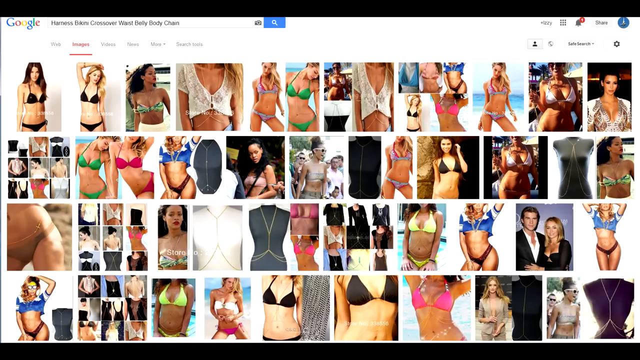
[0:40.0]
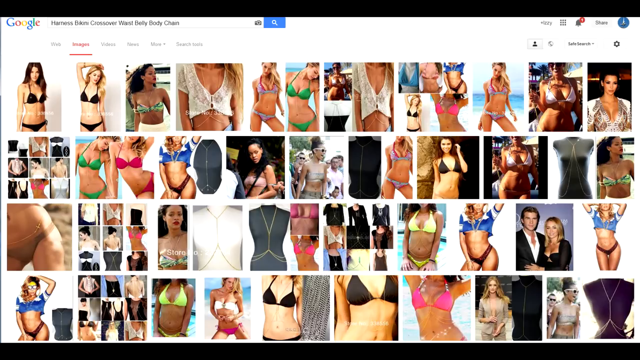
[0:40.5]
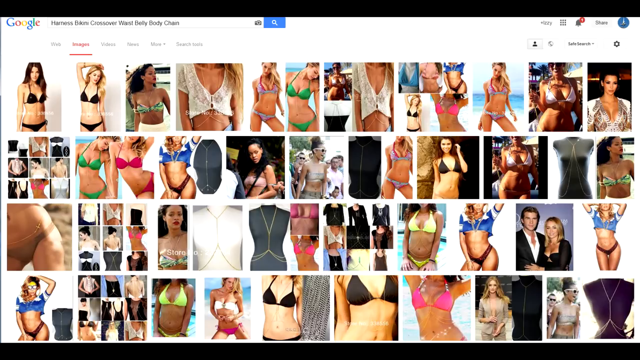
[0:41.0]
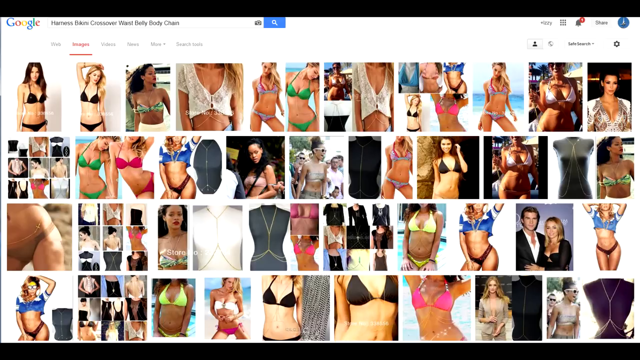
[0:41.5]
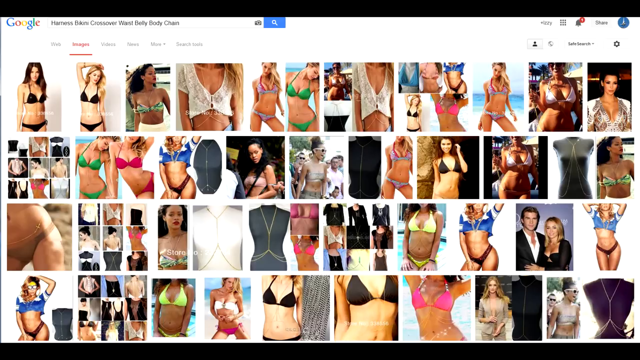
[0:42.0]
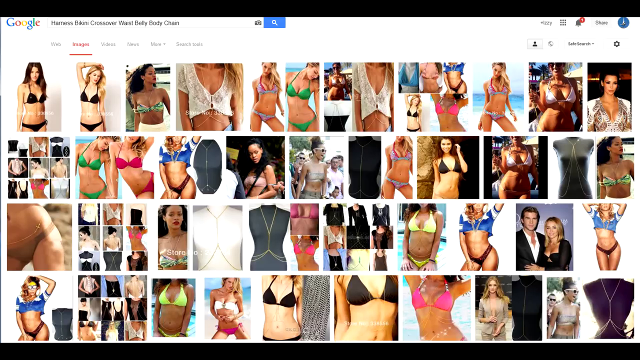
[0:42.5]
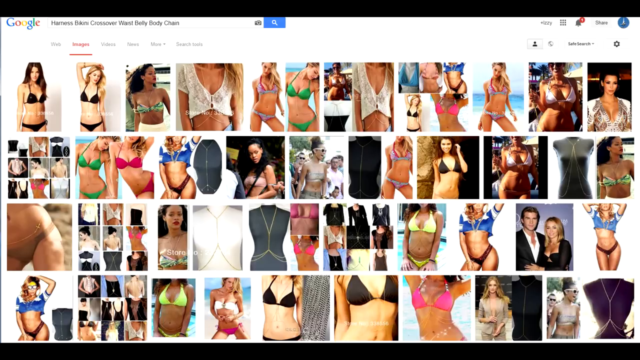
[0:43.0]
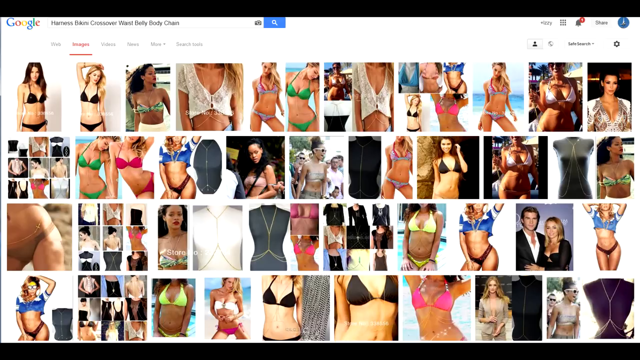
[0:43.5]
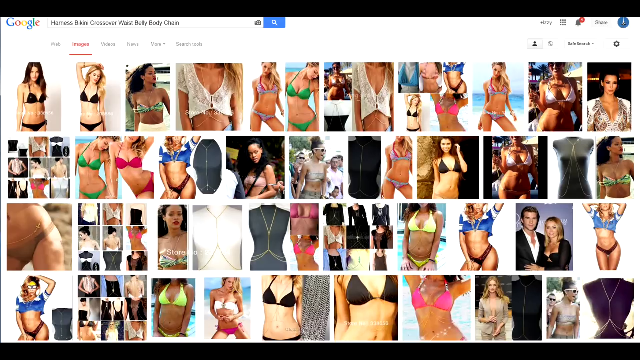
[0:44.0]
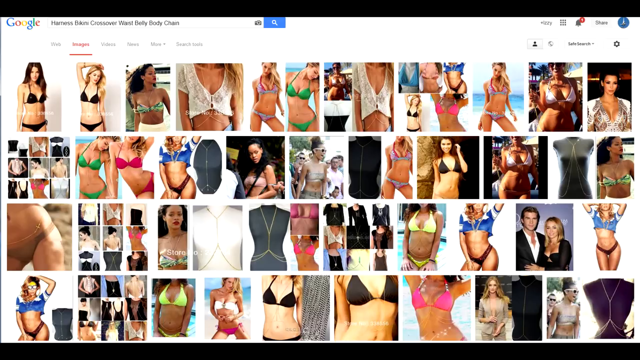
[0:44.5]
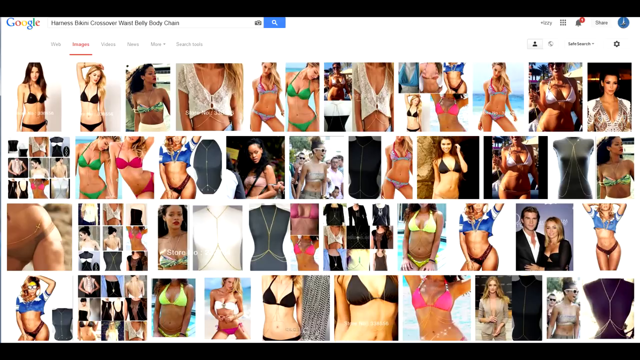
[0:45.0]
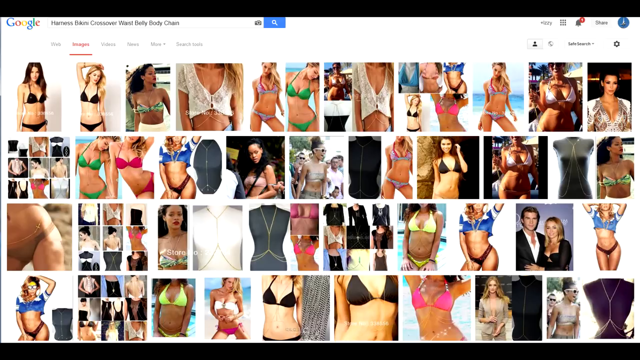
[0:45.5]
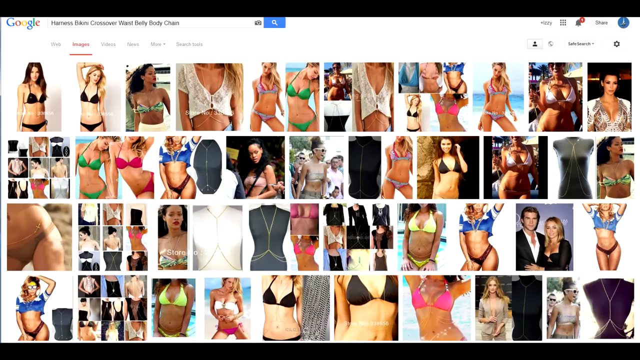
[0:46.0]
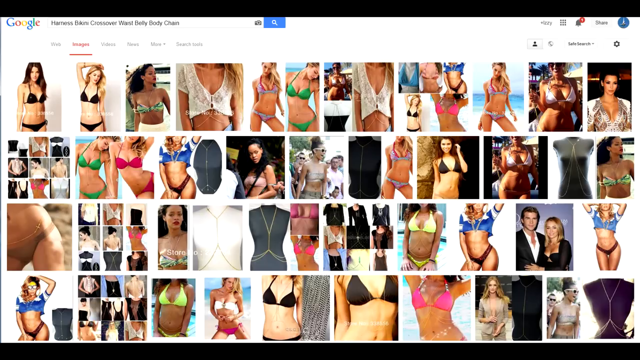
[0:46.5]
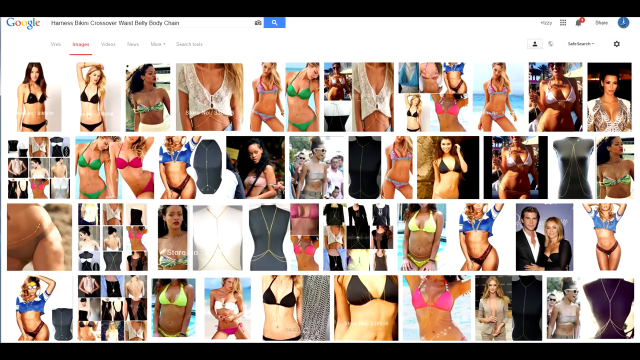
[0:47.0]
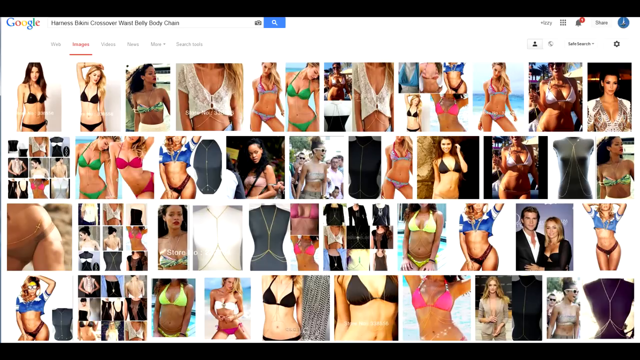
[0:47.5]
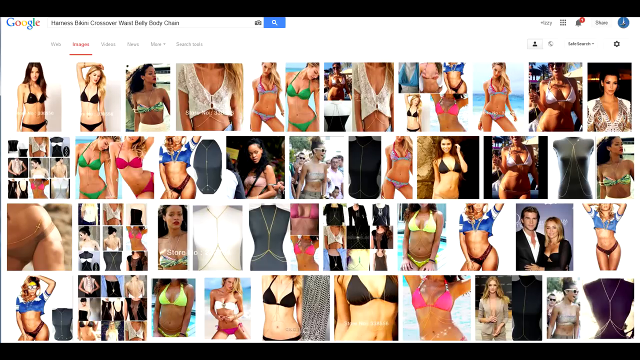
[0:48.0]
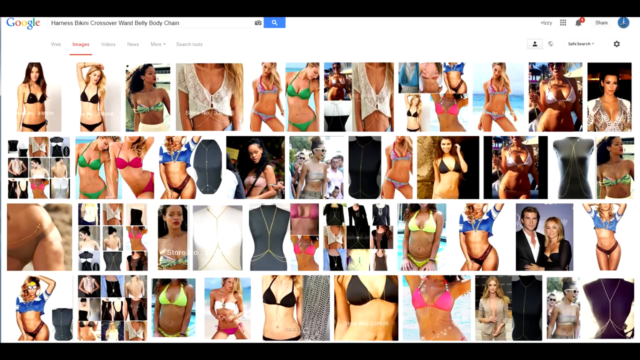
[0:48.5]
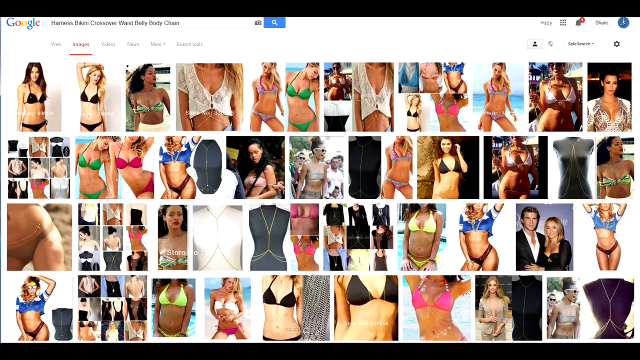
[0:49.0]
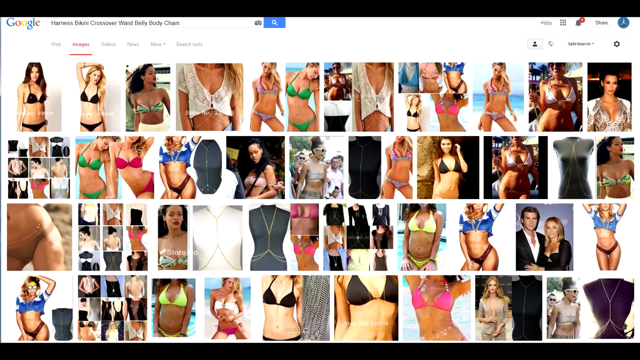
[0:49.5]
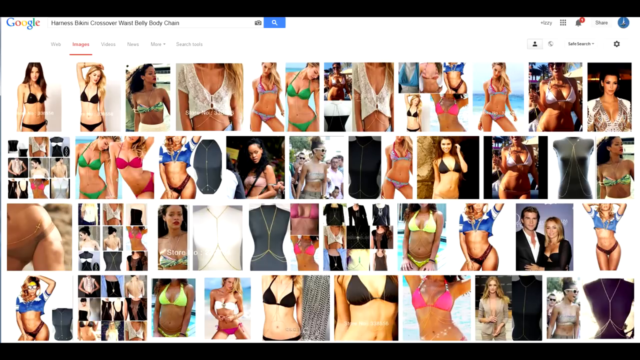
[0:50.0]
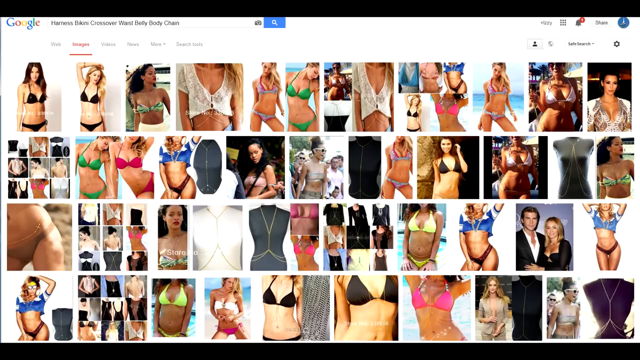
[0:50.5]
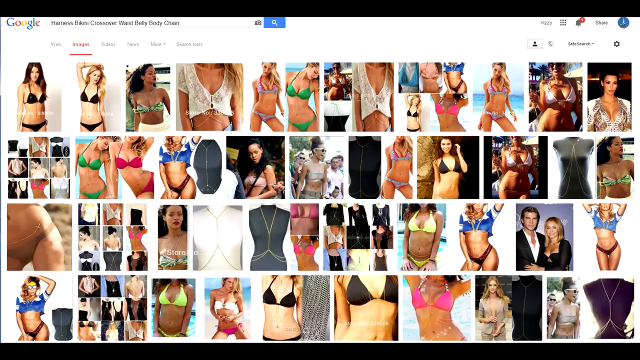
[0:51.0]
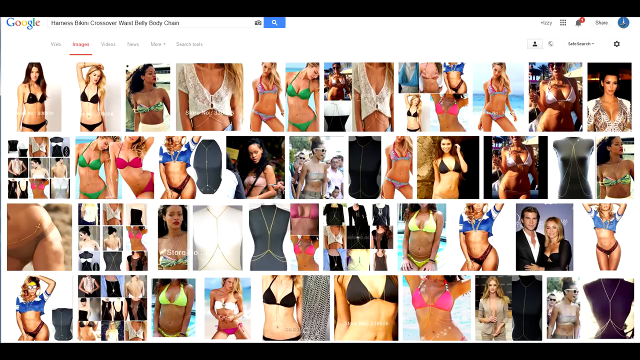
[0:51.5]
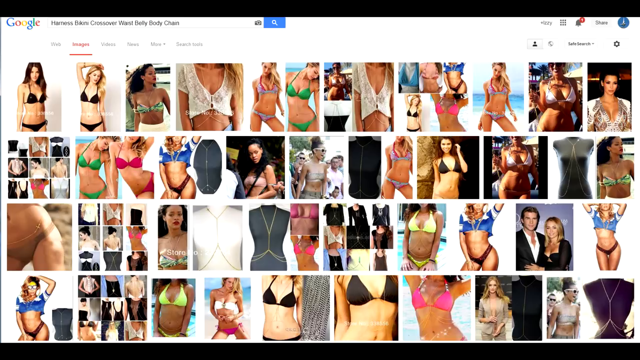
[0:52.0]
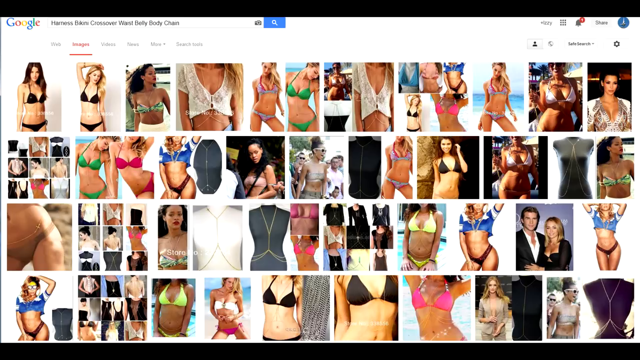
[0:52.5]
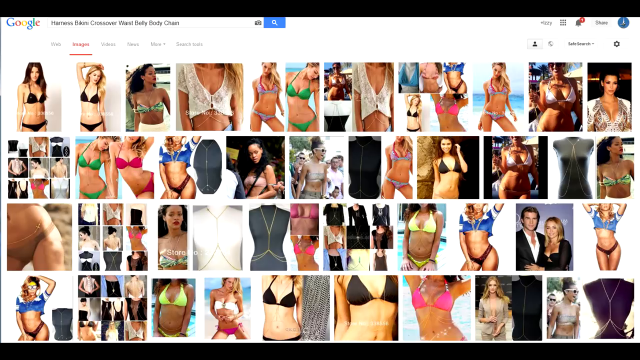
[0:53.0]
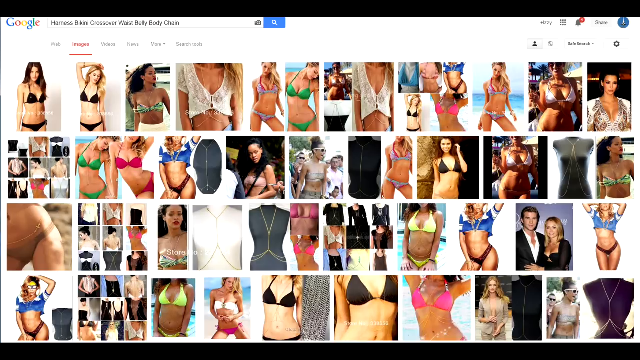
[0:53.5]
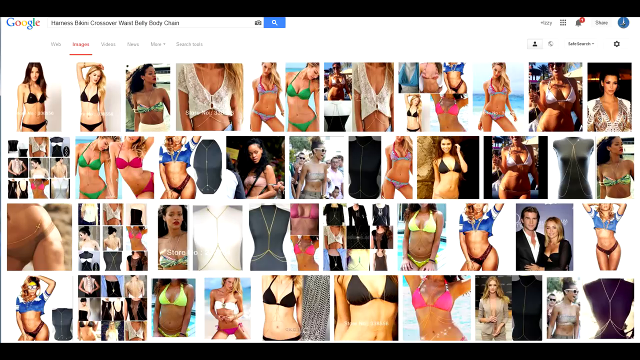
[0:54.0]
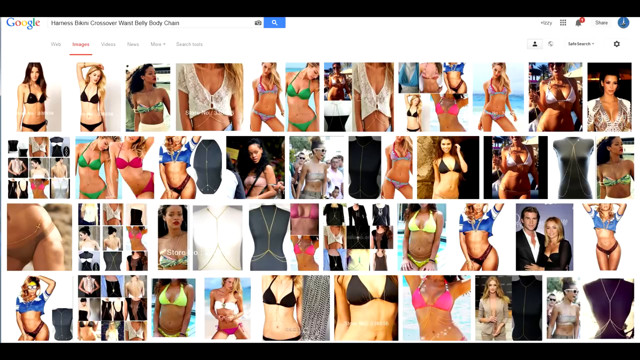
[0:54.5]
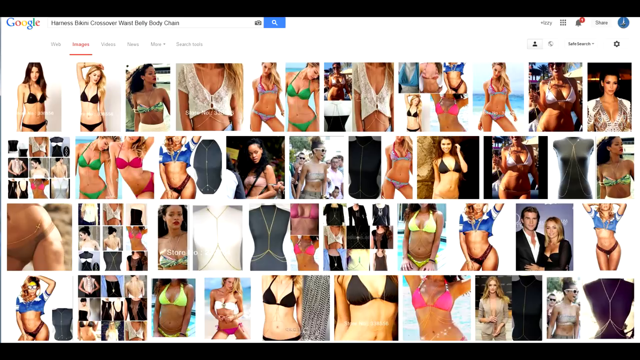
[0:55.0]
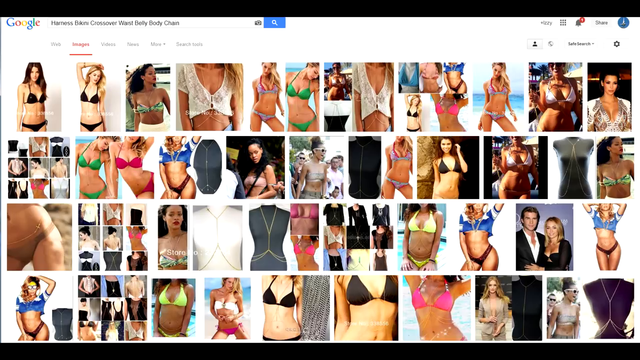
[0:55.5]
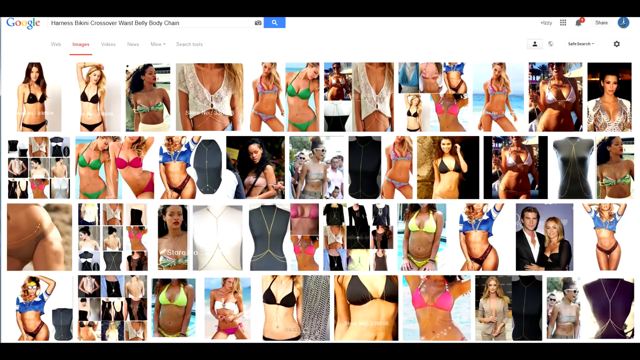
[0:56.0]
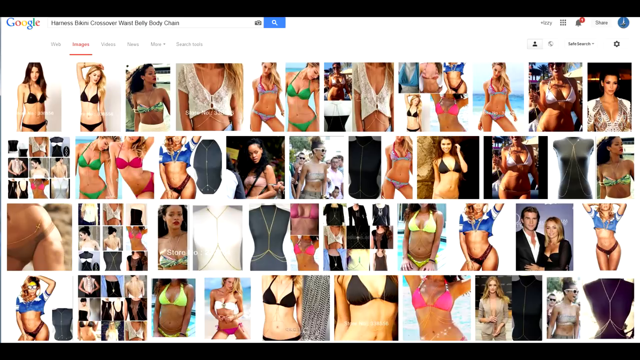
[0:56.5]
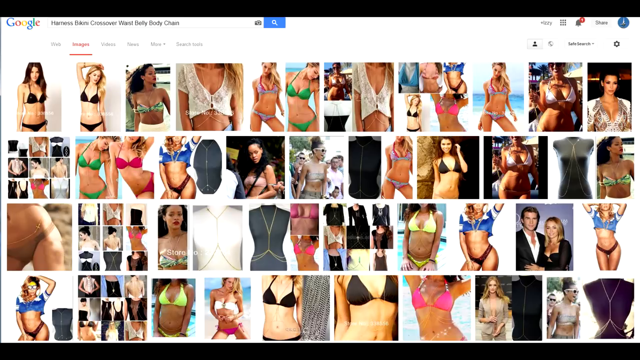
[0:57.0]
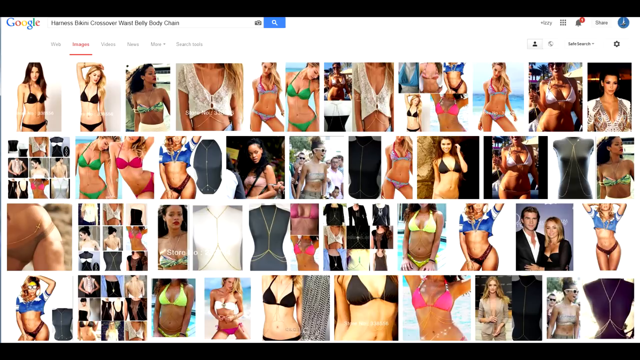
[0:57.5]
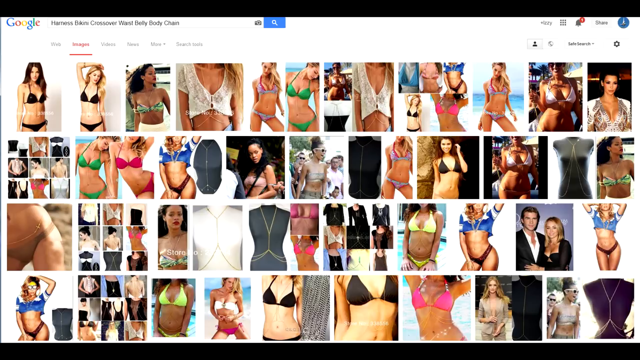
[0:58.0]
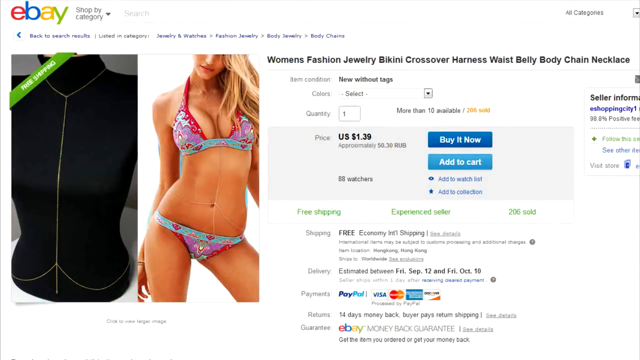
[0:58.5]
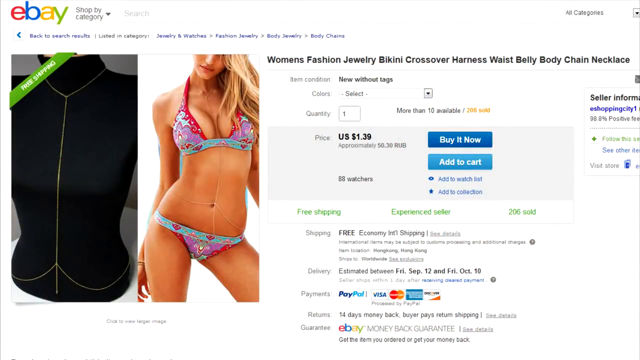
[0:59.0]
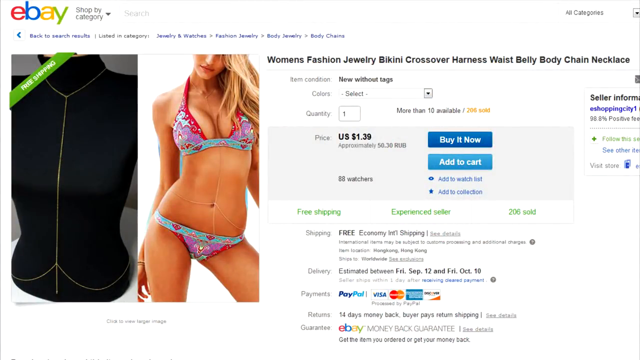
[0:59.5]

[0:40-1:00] A recording of a computer screen shows a Google image search for the term "harness-bikini-crossover-waist-belly-body-chain". The results show various images of different models, as well as mannequins, wearing a similar item: it wraps around the neck like a necklace, and from the front a single chain comes down across the chest and stomach and ends in a large hoop that goes around the waist. The video then cuts to an eBay listing with the header "Women's Fashion Jewelry Bikini Crossover Harness Waist Belly Body Chain Necklace", listed as new without tags for $1.39 USD. The listing shows a picture of the item on a black mannequin and the item photoshopped onto a model wearing a purple, red, and blue bikini.